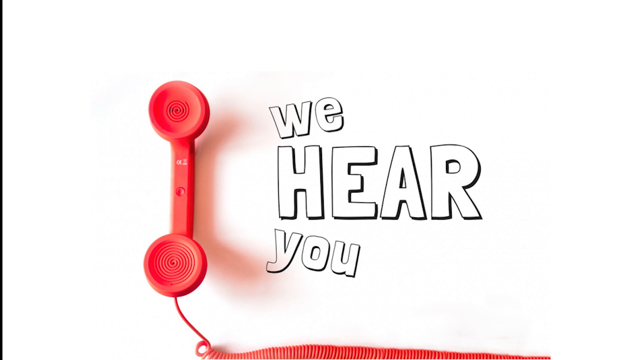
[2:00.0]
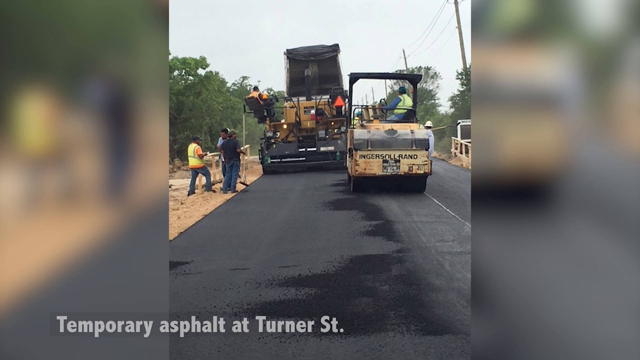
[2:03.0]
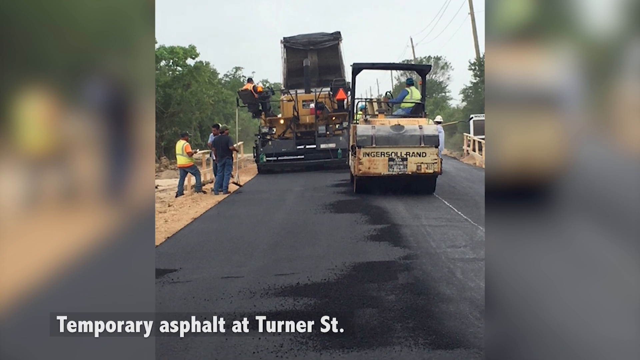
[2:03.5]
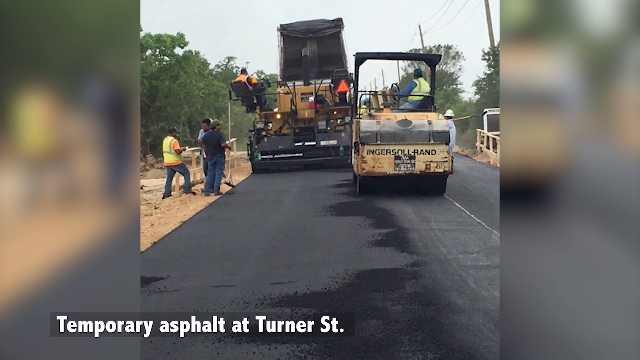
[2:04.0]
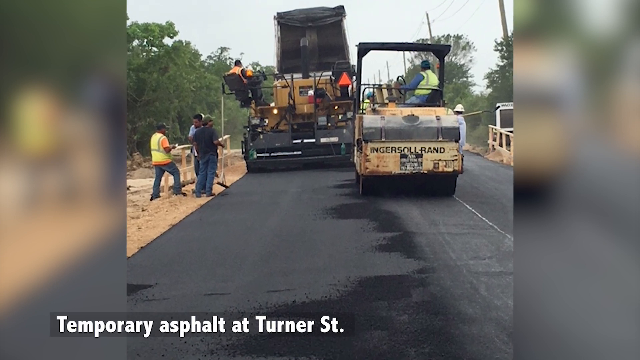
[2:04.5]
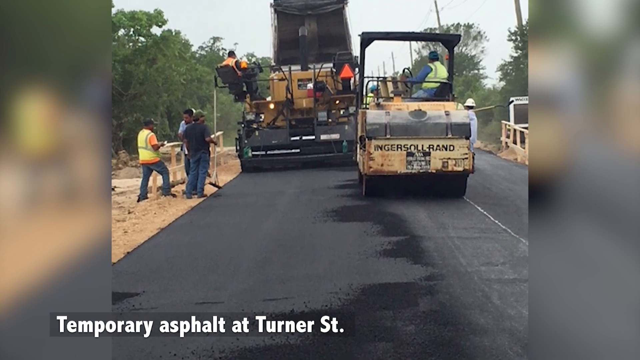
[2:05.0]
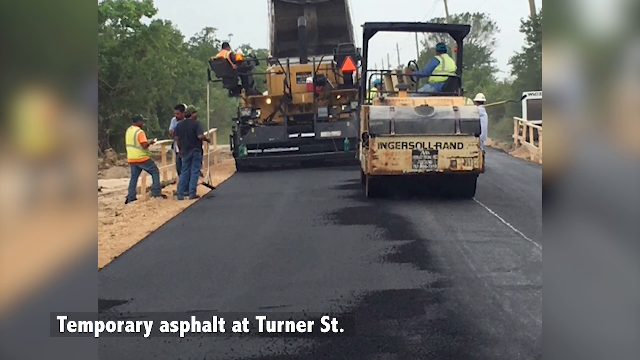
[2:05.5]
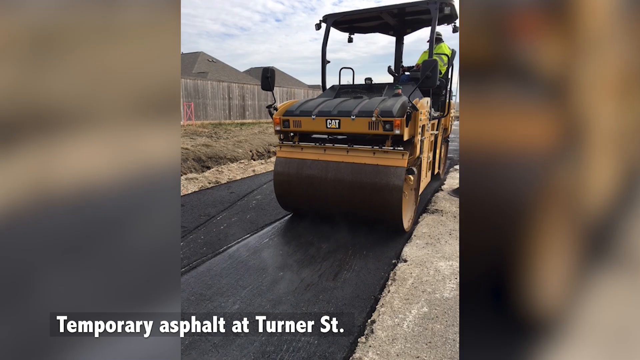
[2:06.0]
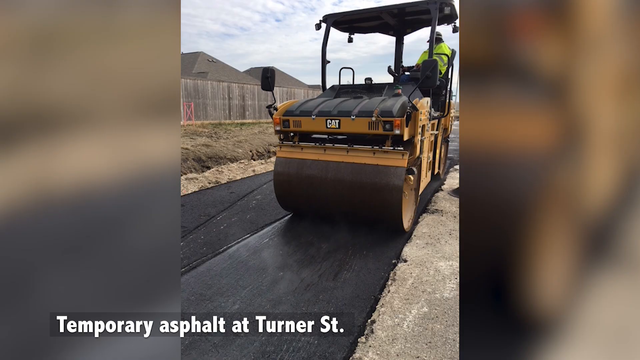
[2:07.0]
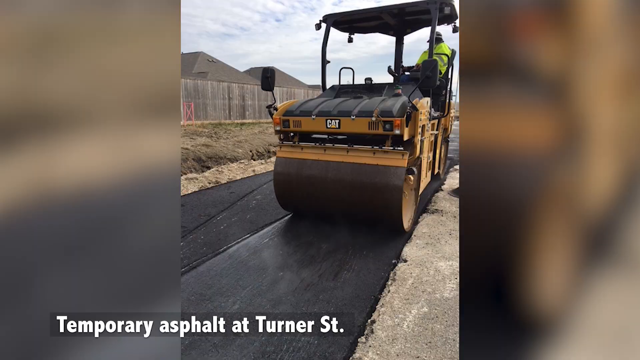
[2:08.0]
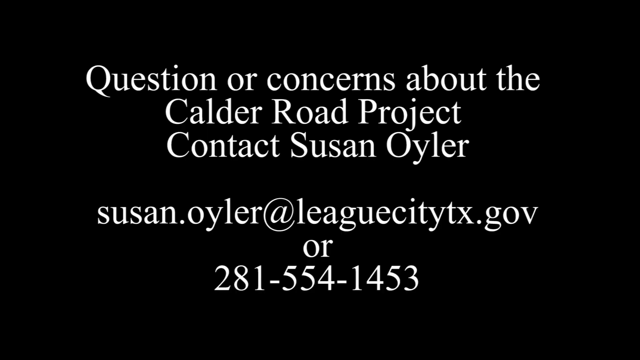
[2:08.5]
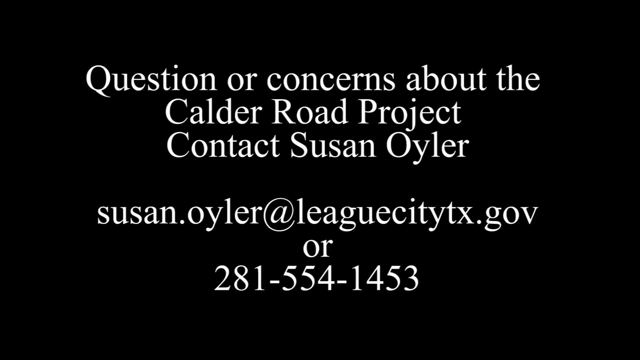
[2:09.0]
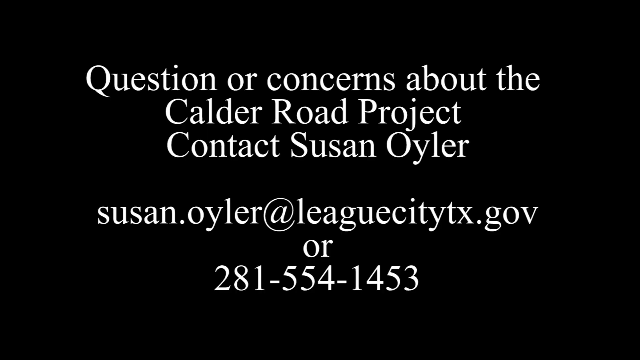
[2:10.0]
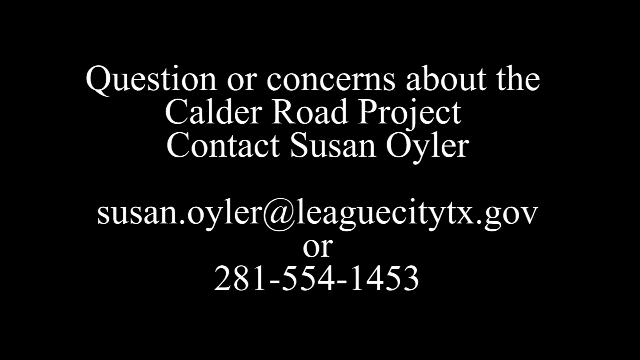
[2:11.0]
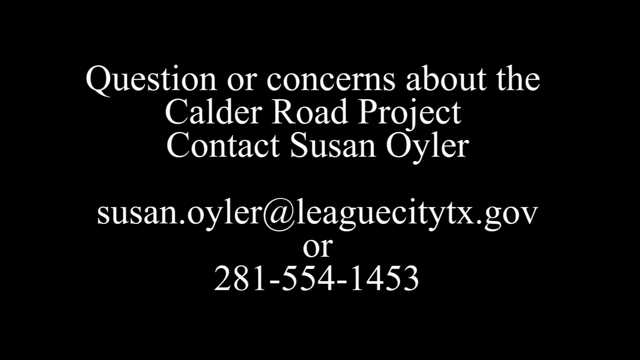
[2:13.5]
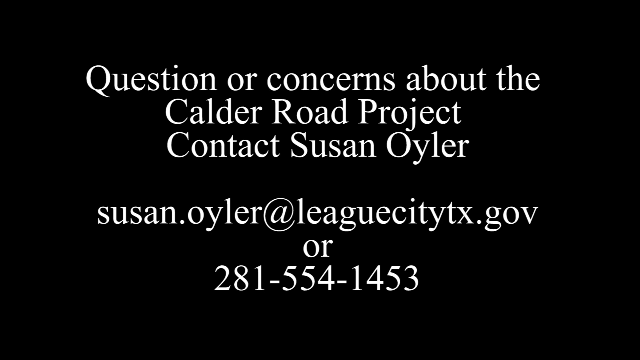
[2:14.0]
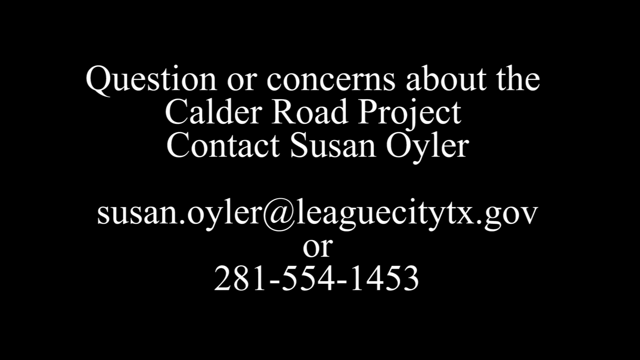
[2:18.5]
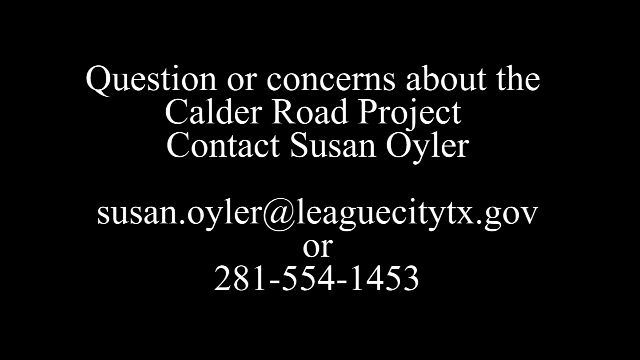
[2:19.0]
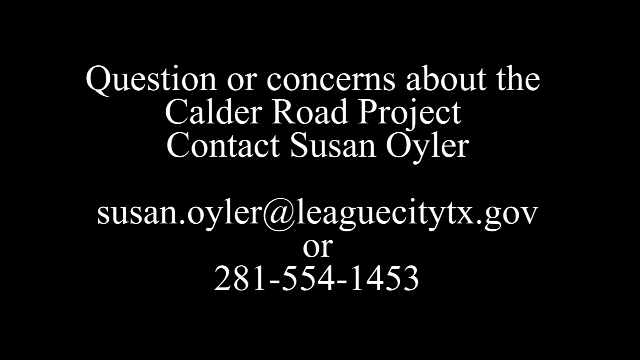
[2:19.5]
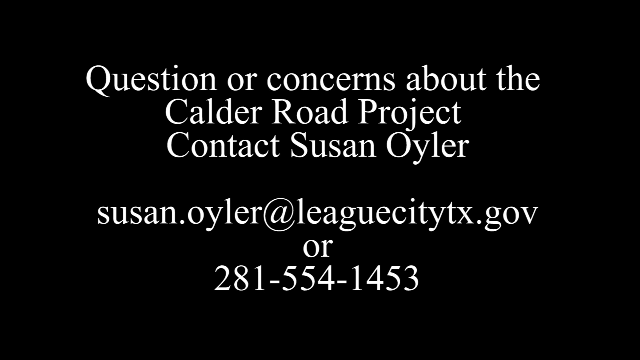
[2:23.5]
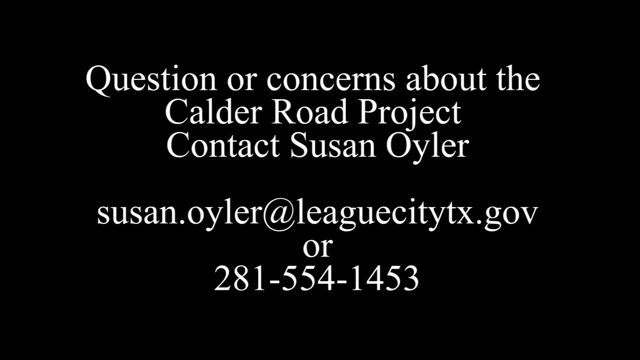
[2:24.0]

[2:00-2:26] The view zooms in on an image of construction workers smoothing out a black asphalt road. Workers are on the sides, one with some type of broom-type device, another standing on the edge of a big piece of equipment half the width of the road, and another driving away, almost like a steamroller. The front of one of these trucks shows it is a steamroller; one half of the road is smooth and the other half matte looking, with dirt on each side. On the left, a fence borders a subdivision, and rooftops of houses are visible. A black screen then shows contact information for questions or concerns: an email and a phone number for League City and the contact Susan Oyler.